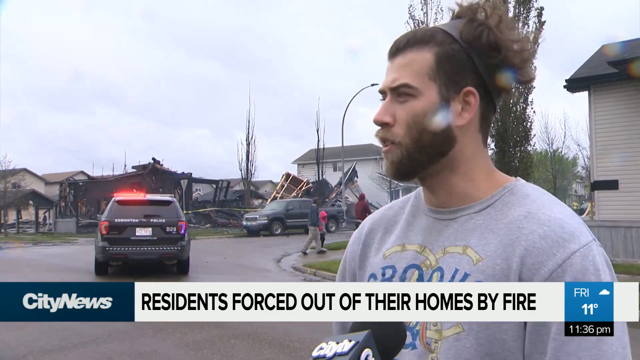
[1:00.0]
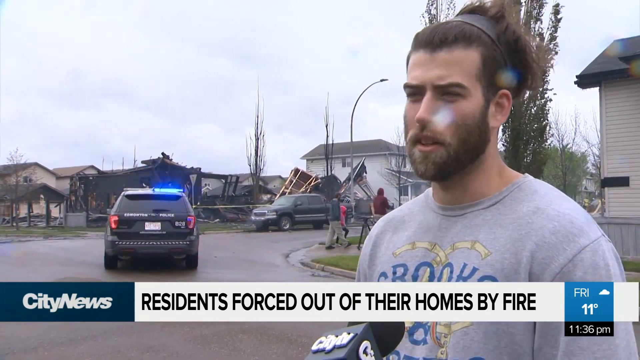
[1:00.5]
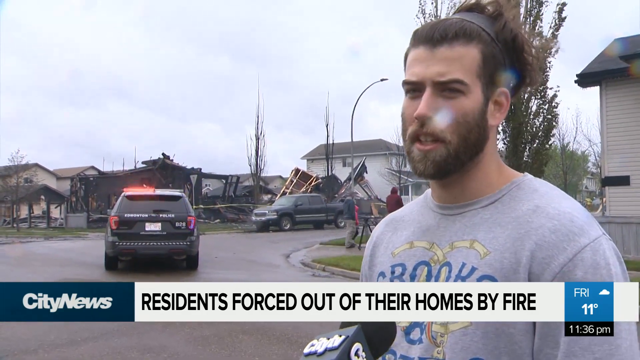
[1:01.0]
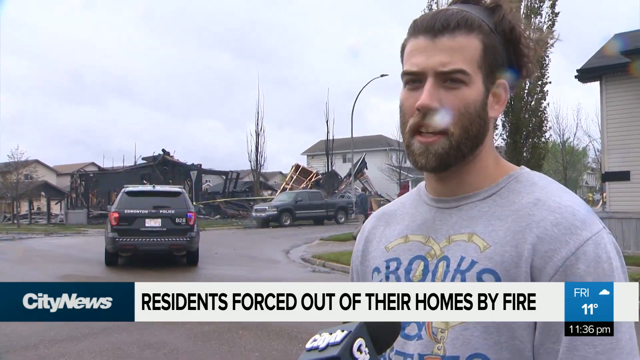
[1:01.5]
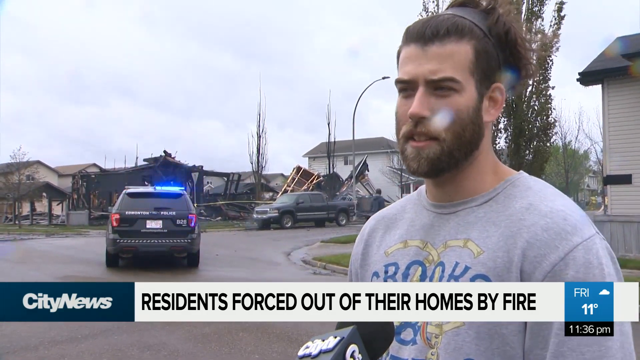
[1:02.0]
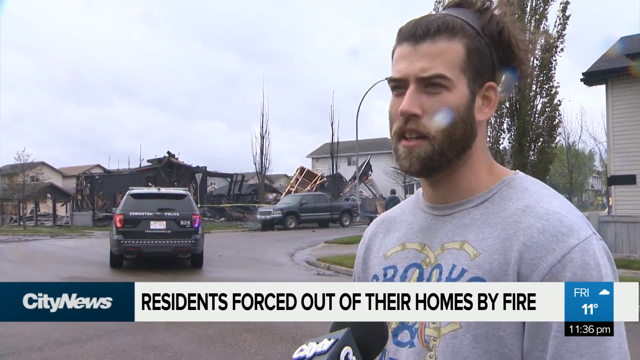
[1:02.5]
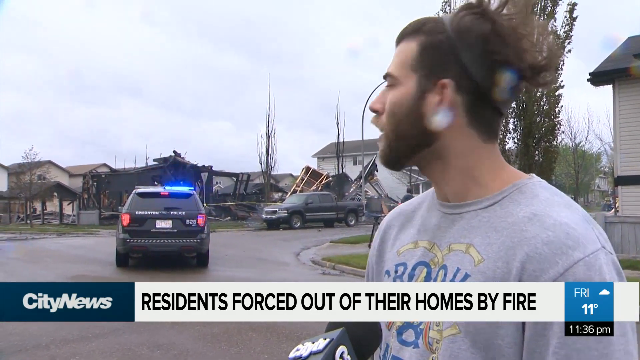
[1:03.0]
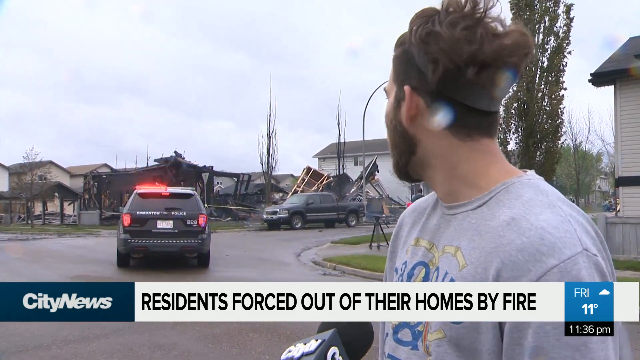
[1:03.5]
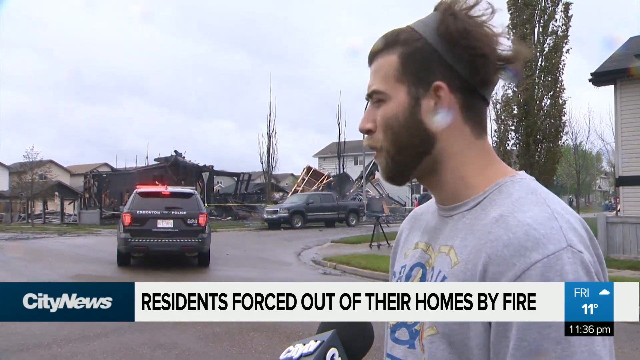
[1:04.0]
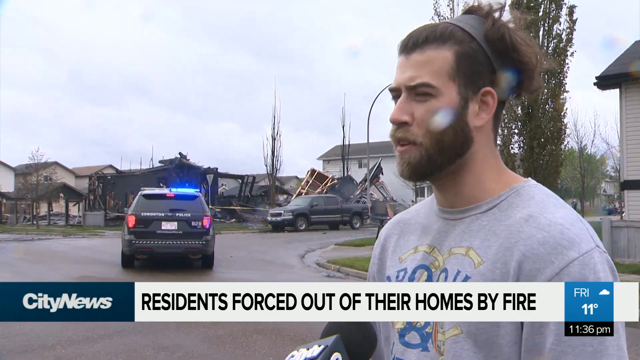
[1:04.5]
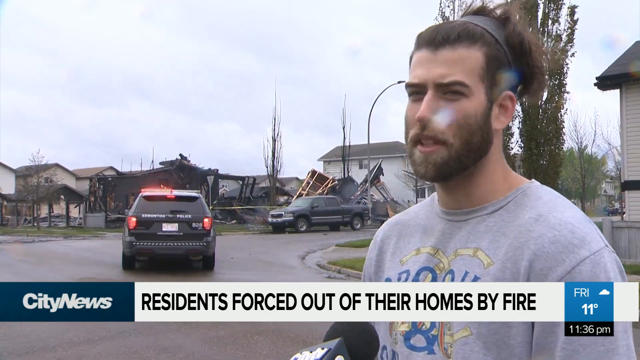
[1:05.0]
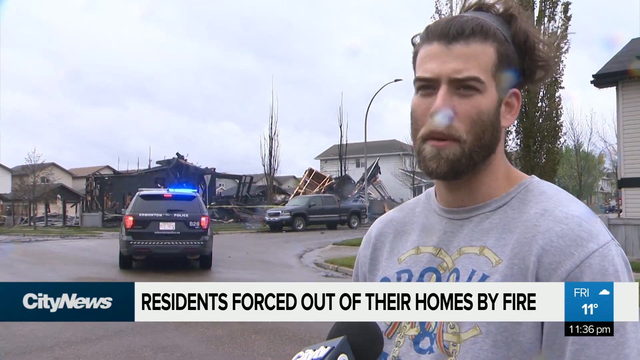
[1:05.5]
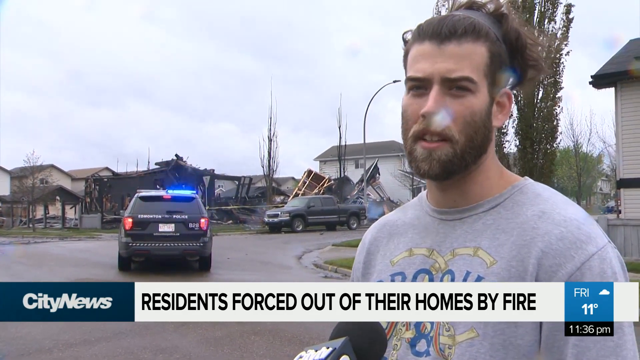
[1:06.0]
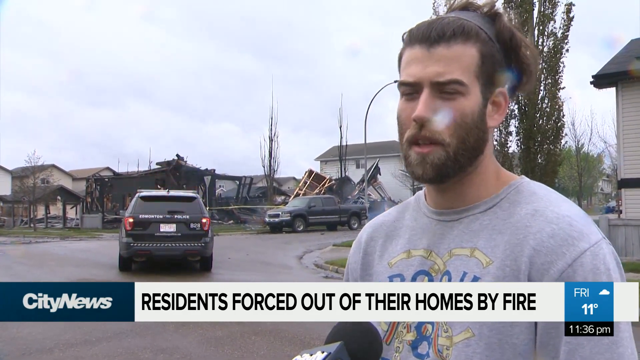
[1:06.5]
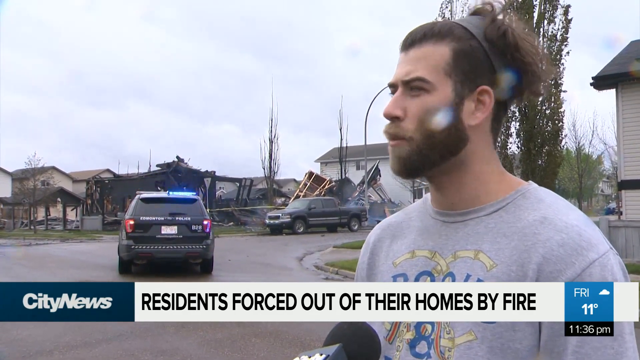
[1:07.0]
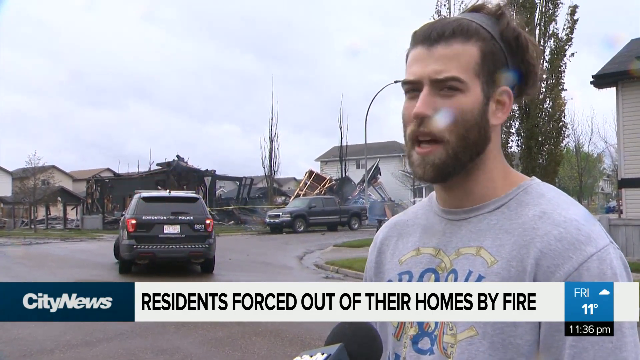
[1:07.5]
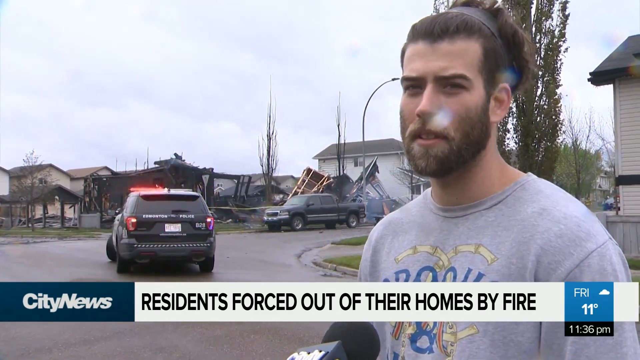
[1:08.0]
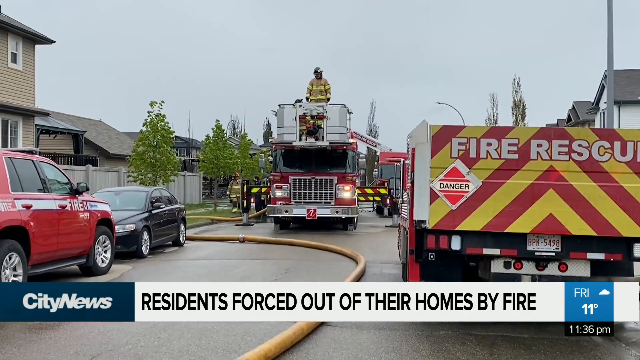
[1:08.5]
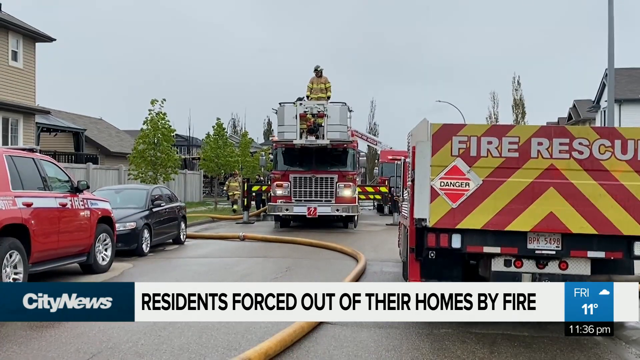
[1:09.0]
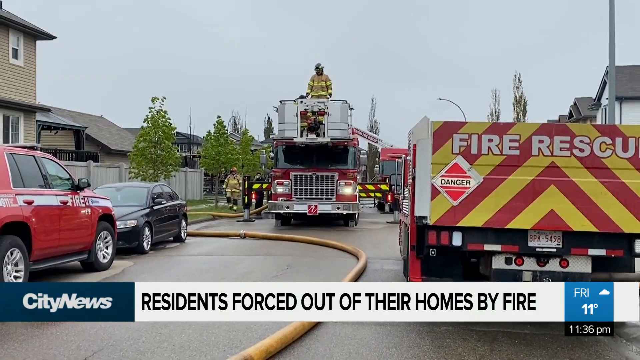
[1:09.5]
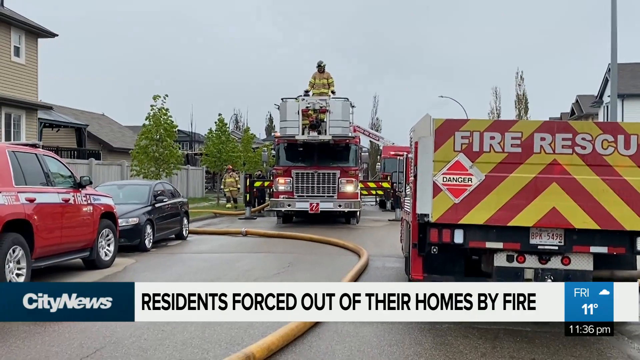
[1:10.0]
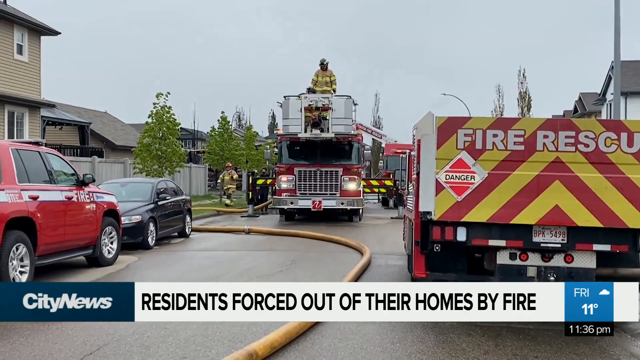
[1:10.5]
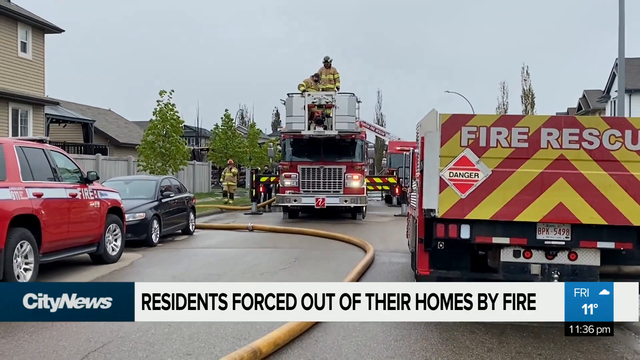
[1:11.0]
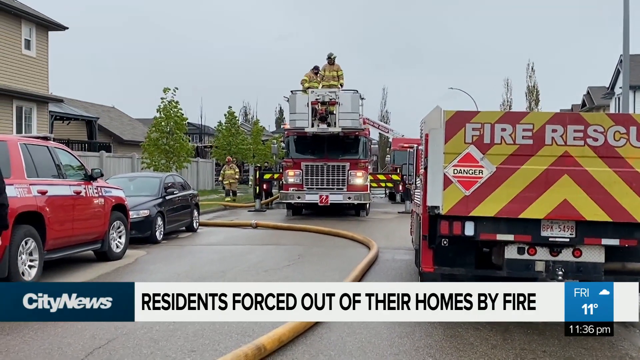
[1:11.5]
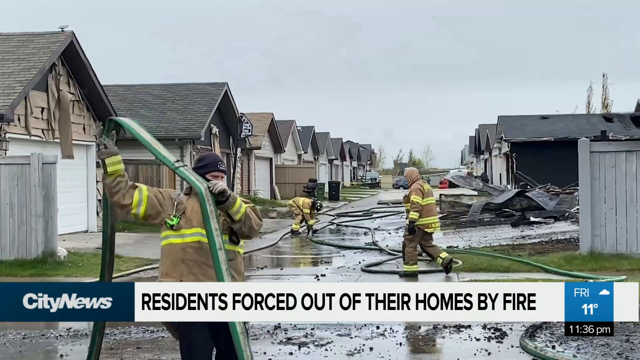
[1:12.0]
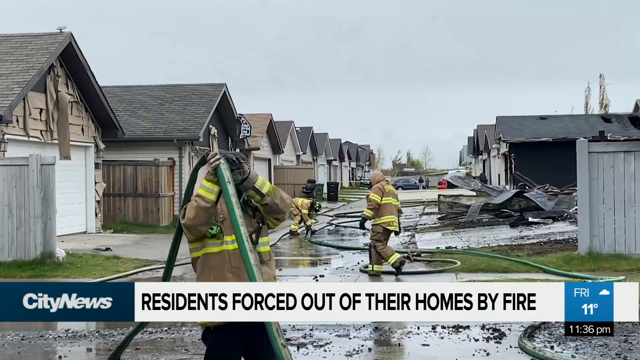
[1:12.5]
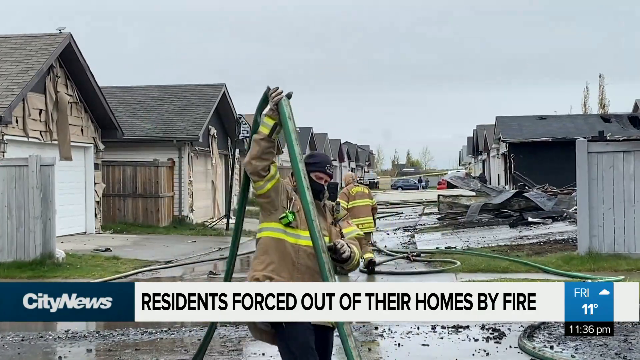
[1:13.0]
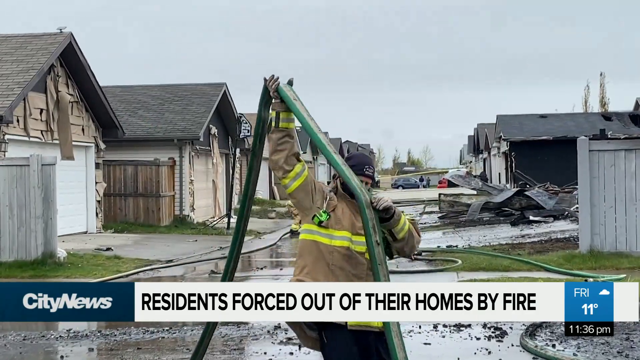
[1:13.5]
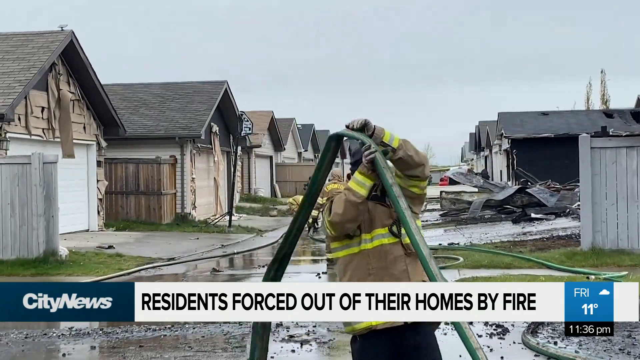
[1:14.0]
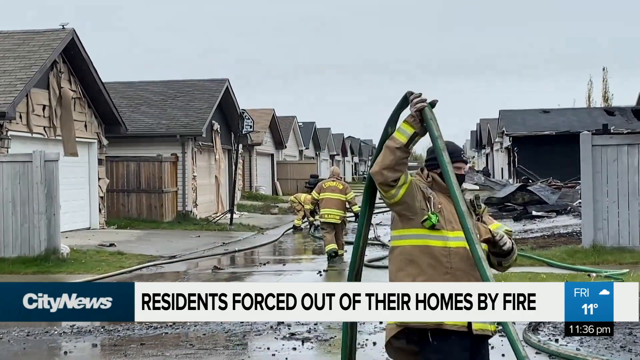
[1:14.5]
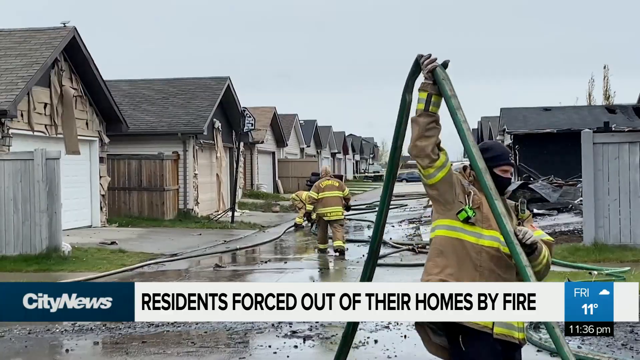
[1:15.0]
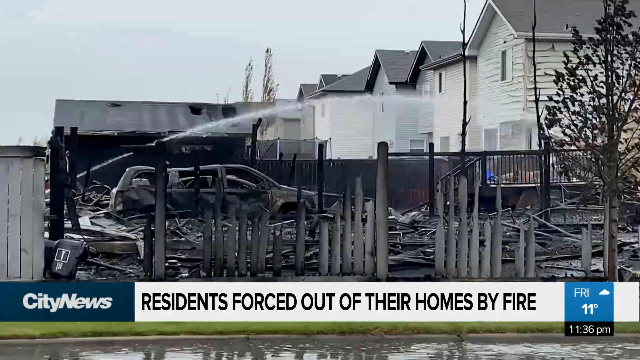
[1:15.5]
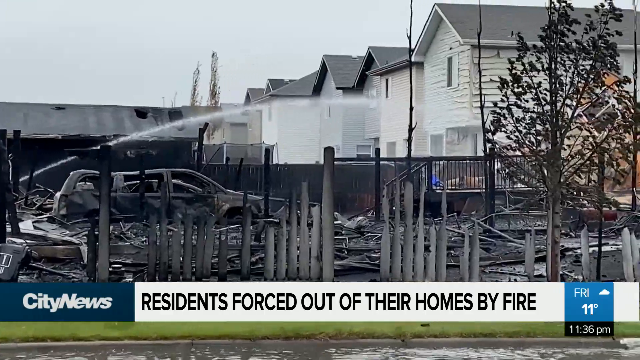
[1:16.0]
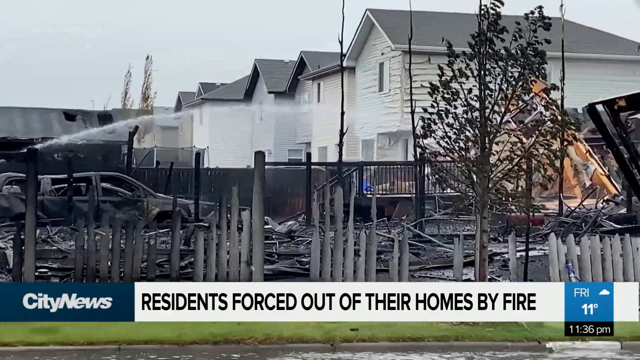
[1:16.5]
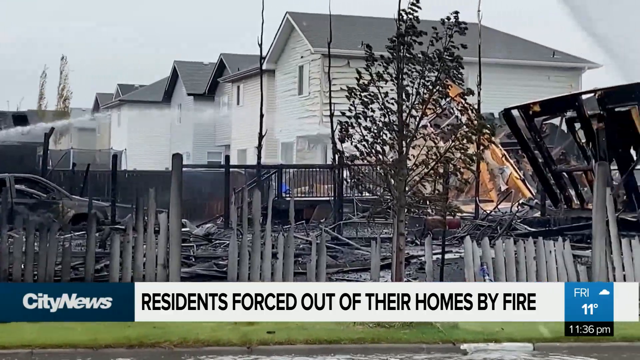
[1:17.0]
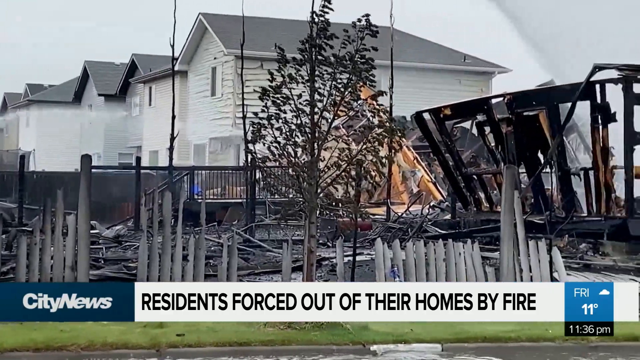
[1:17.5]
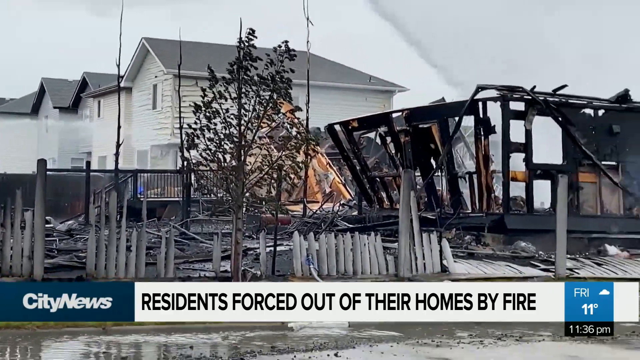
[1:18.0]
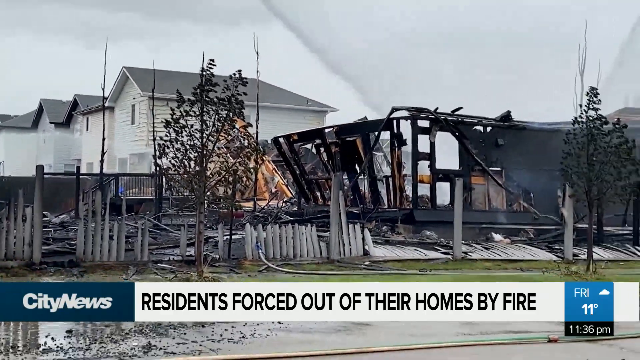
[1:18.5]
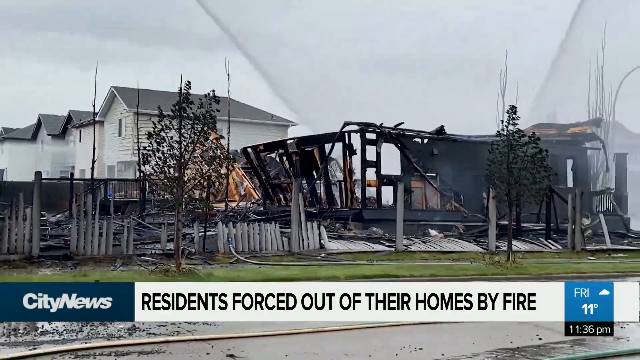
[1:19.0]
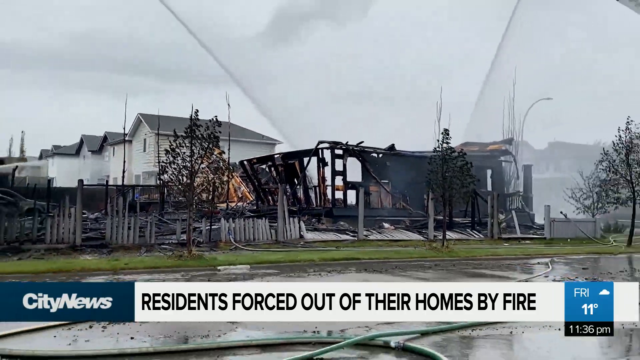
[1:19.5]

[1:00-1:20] A man with a beard has a man bun held up by what looks like some type of round leather hair attachment. He wears a gray shirt with a blue logo on the front. Behind him is a black police car with red and white lights flashing, and further behind is the burnt and broken-down home, almost completely crashed to the ground, with smoke and bits of smoking embers still coming out of it. A black pickup truck is in the background, and a few people walk around looking at the debris and the mess. Next comes a large image of a fire and rescue truck, with a red and yellow background that says "fire and rescue" and a diamond-shaped logo that says "danger". To the left of that is a large front picture of a fire truck. Two firefighters ride in the white cage of the extension ladder on top of the fire truck.